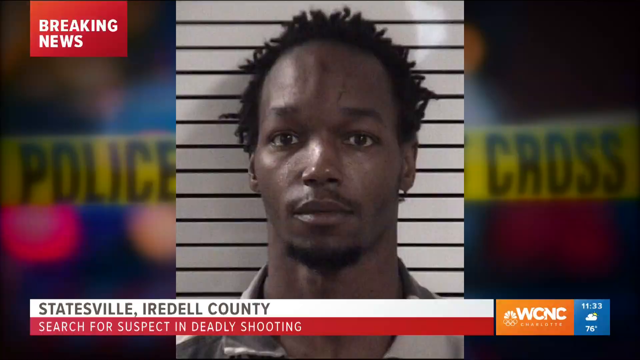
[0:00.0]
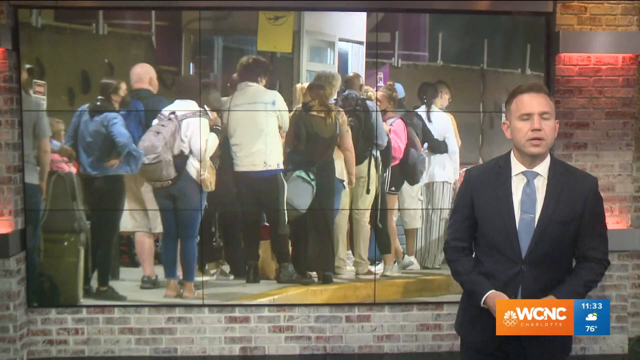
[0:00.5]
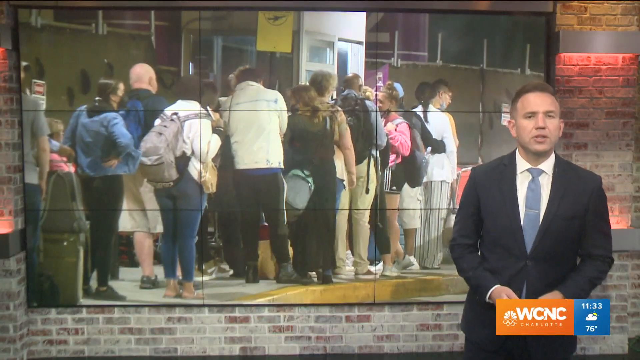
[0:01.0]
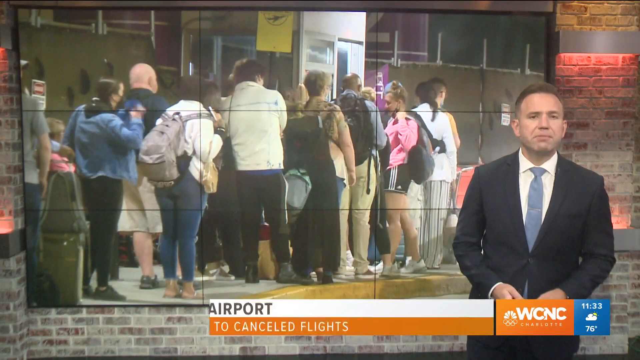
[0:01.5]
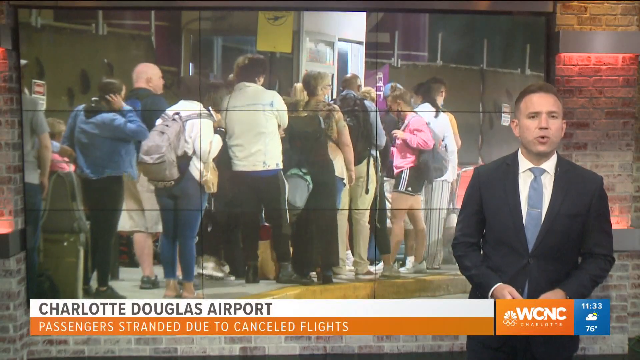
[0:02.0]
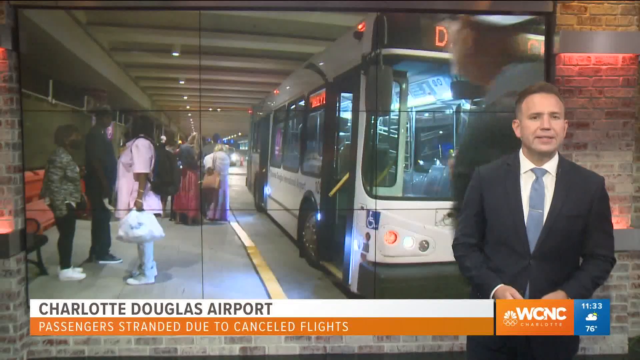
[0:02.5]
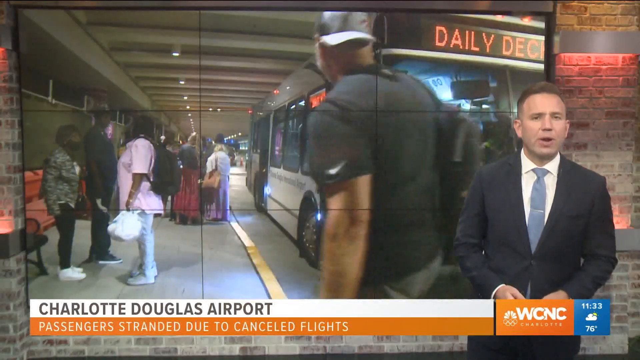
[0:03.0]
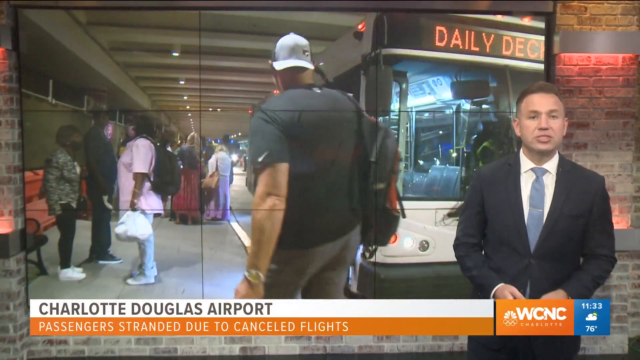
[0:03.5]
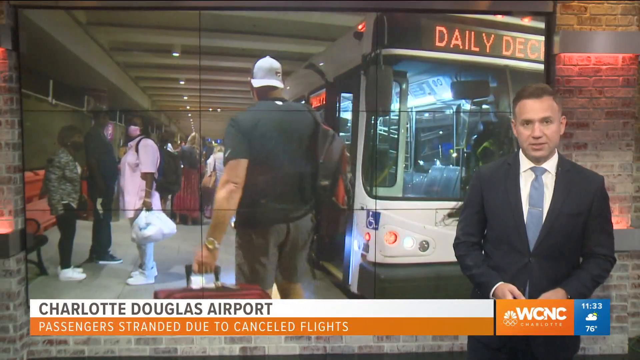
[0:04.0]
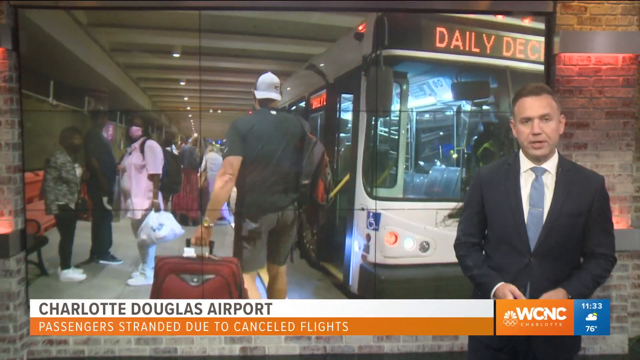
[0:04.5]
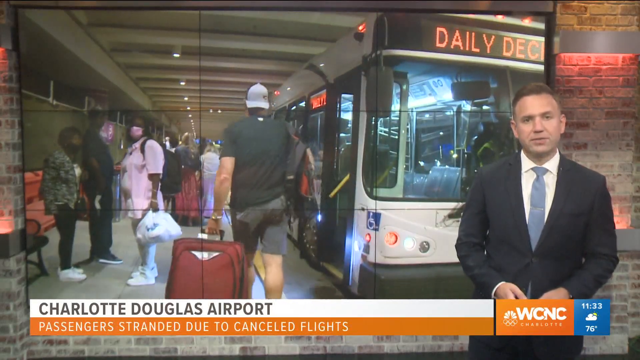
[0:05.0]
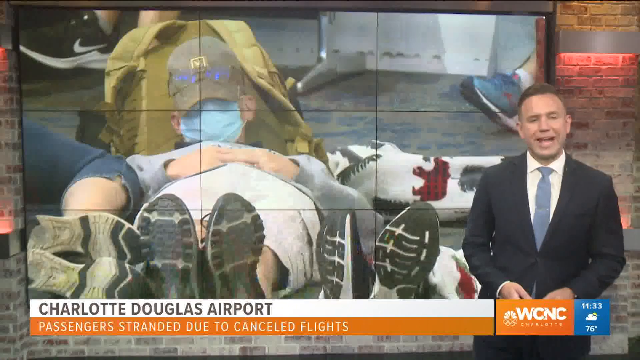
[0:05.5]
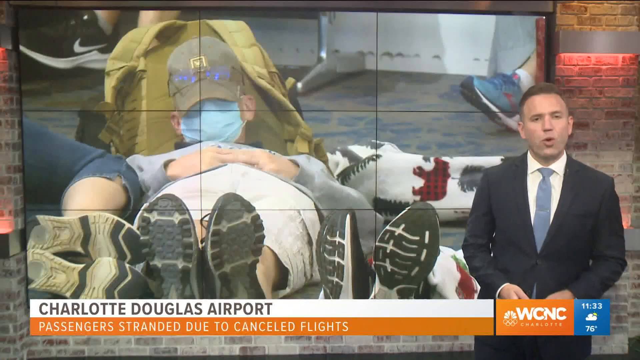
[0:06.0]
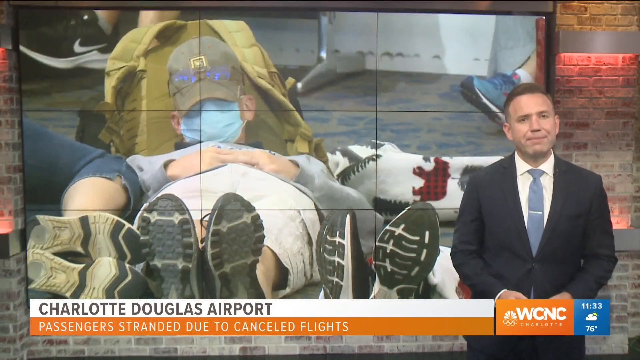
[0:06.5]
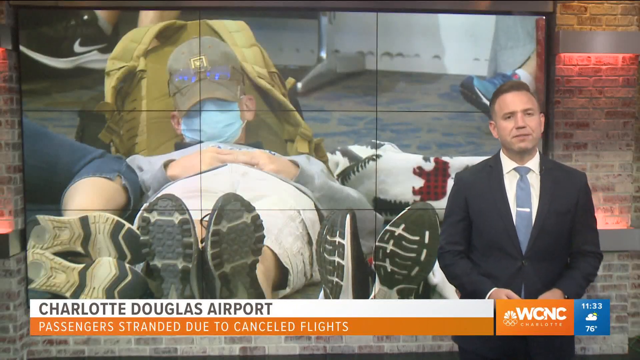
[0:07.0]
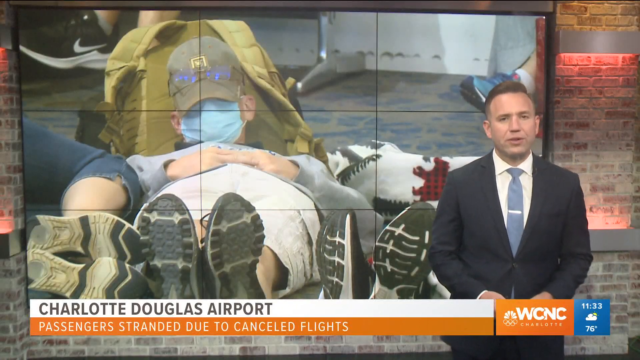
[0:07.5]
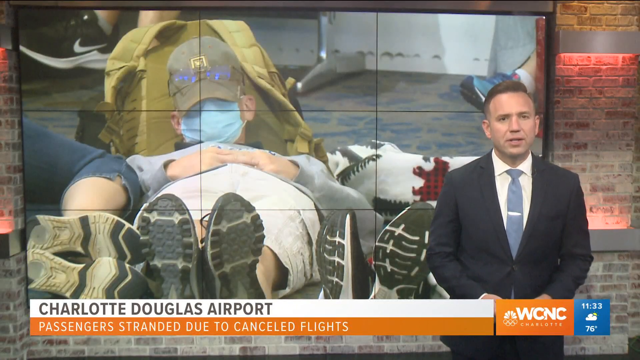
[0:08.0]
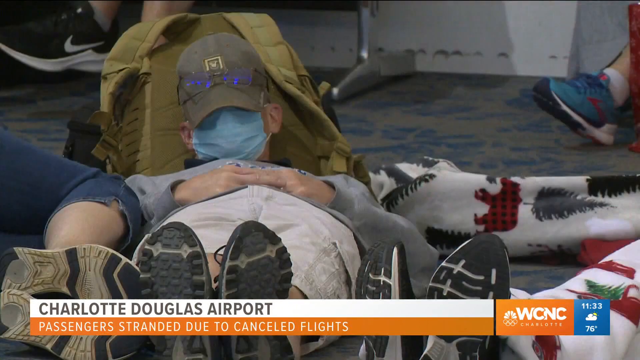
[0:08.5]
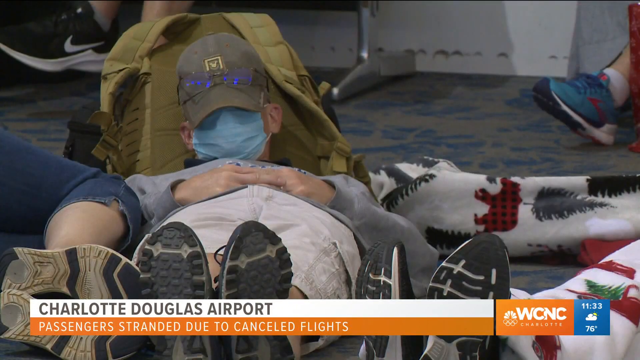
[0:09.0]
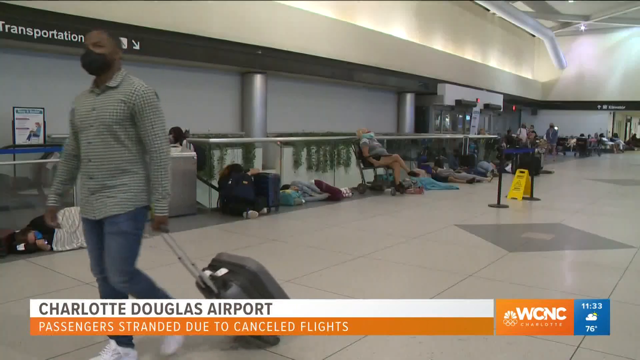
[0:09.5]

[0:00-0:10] Many people are lying down on the floor.